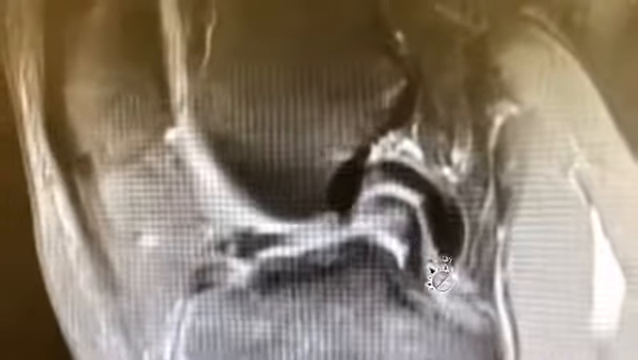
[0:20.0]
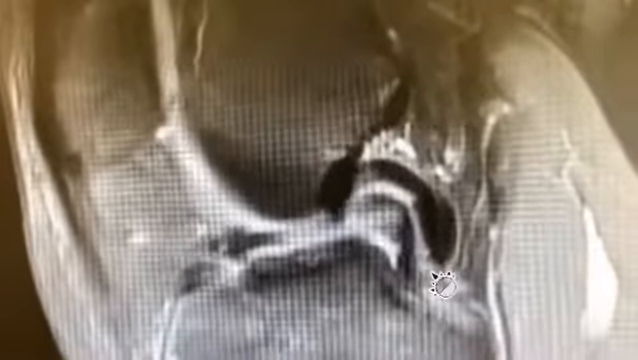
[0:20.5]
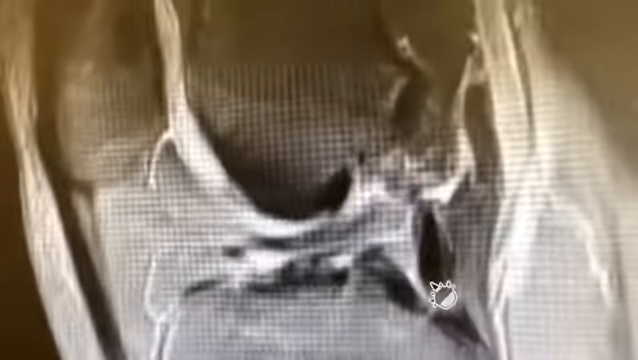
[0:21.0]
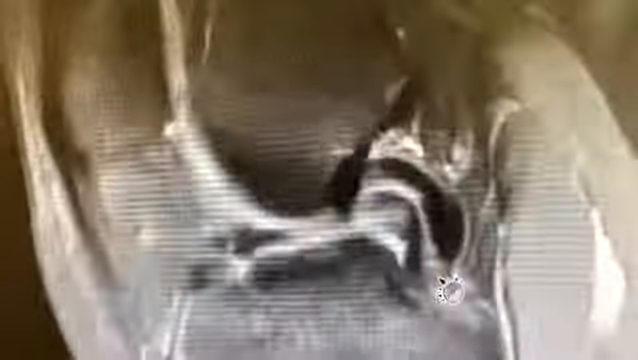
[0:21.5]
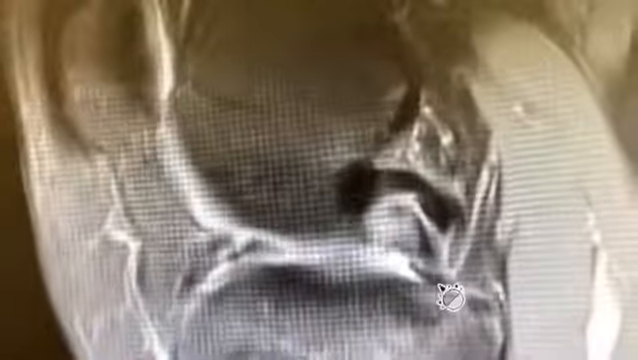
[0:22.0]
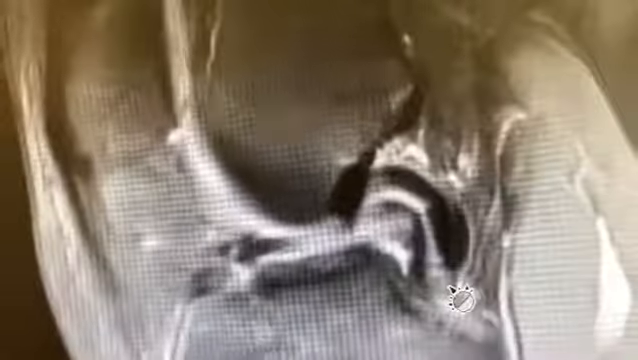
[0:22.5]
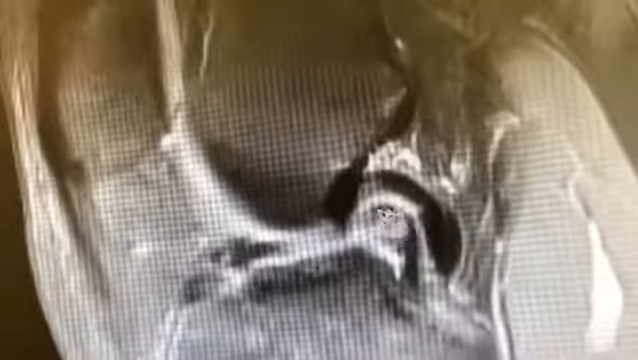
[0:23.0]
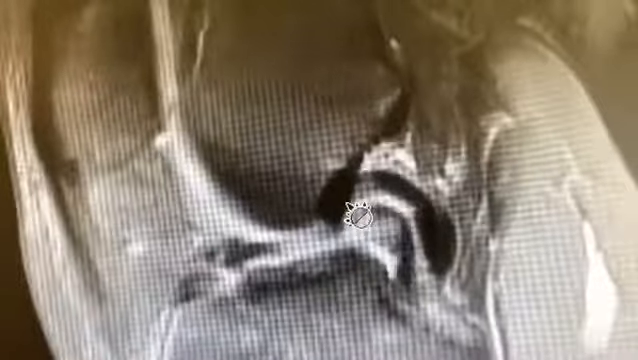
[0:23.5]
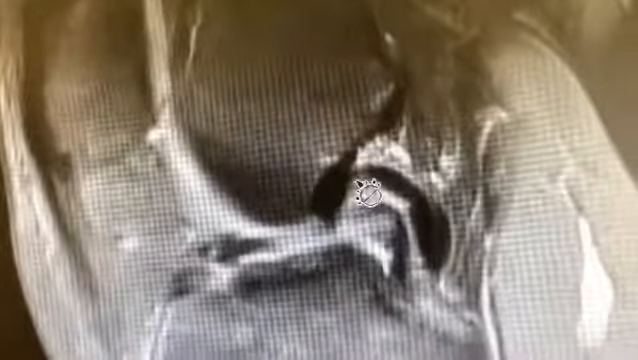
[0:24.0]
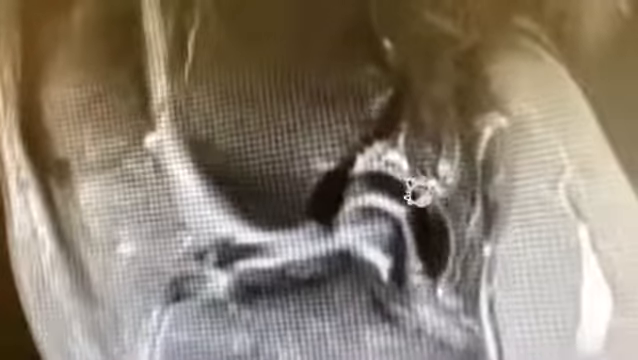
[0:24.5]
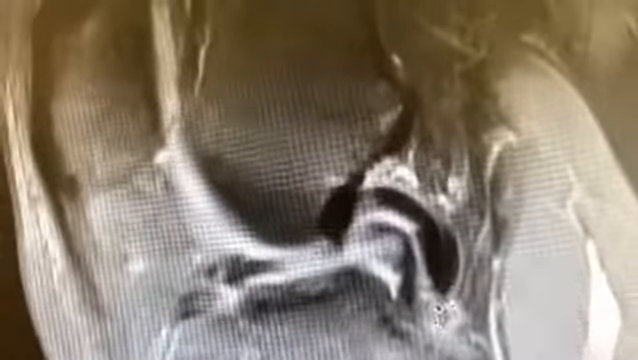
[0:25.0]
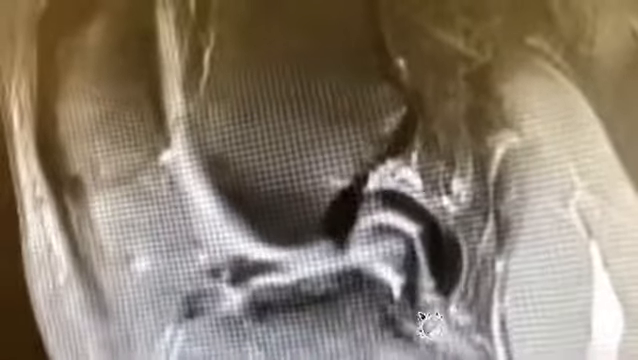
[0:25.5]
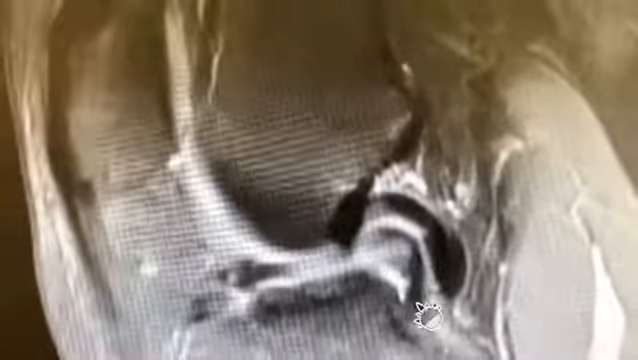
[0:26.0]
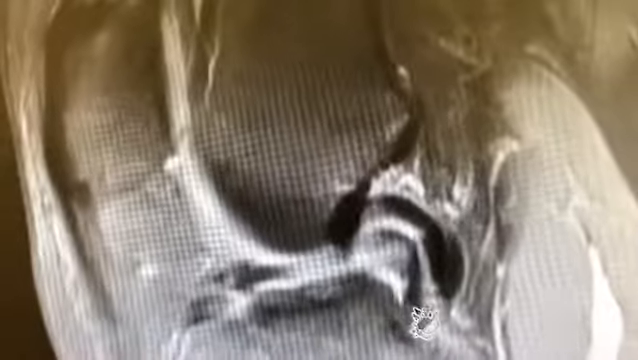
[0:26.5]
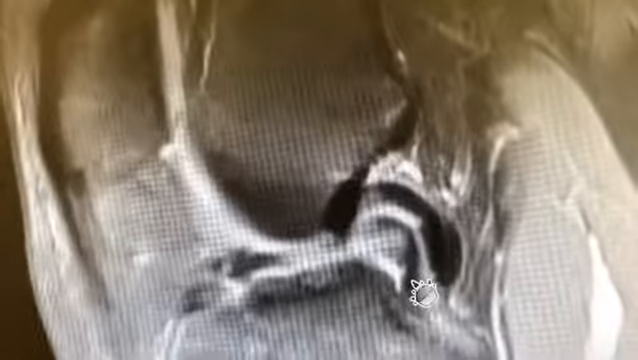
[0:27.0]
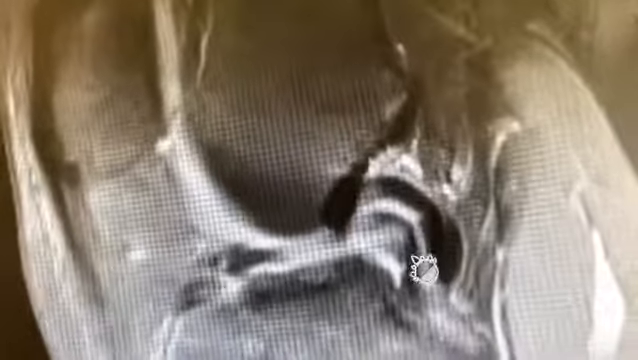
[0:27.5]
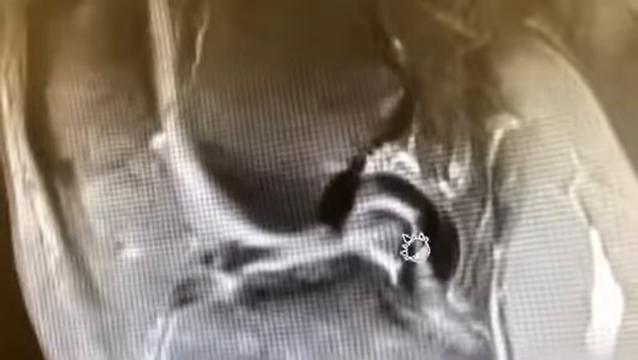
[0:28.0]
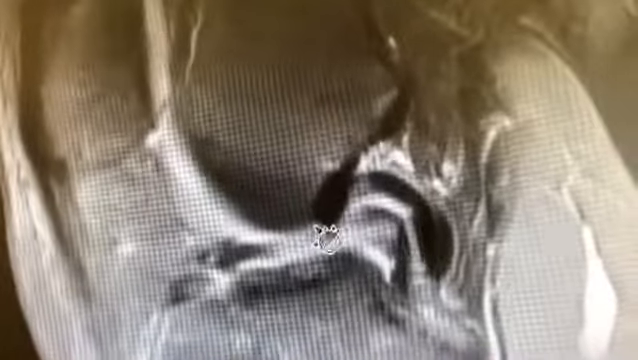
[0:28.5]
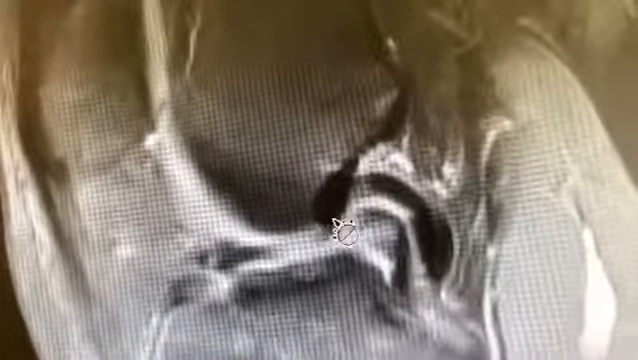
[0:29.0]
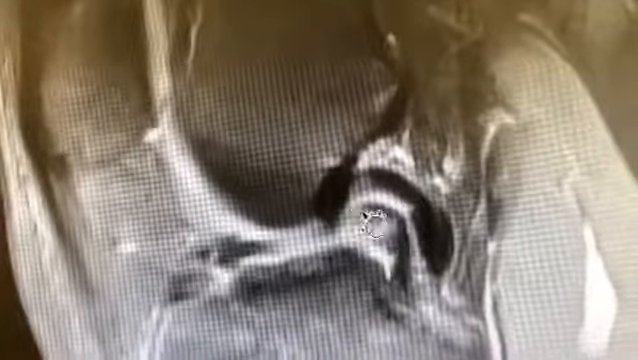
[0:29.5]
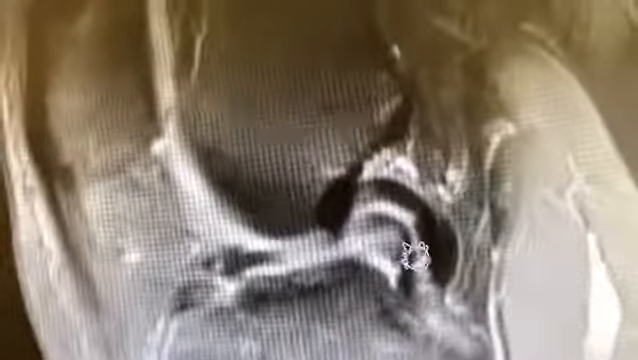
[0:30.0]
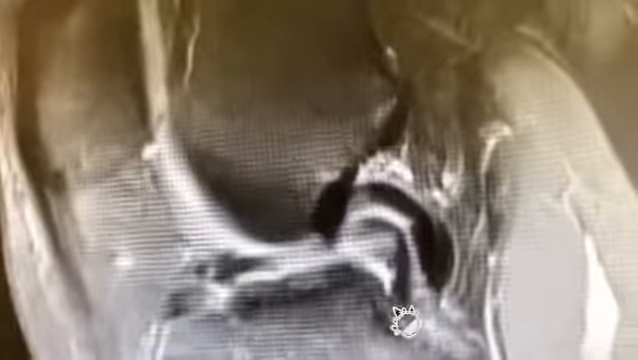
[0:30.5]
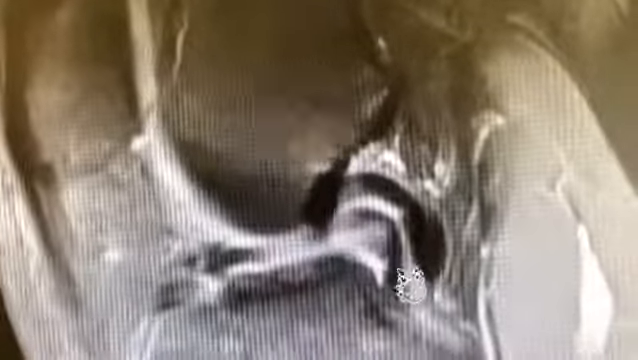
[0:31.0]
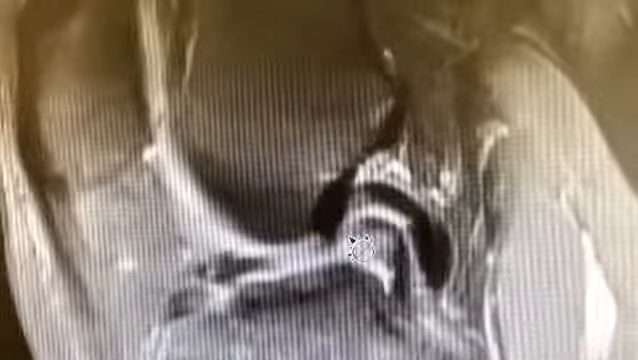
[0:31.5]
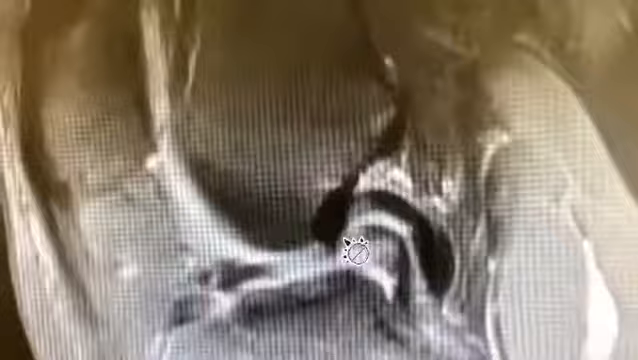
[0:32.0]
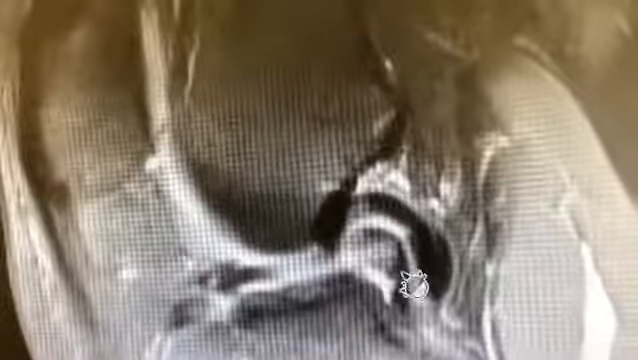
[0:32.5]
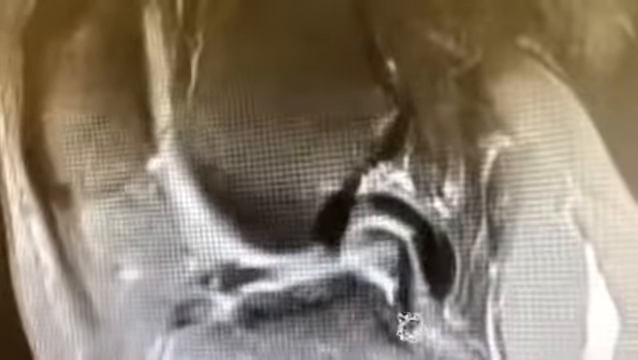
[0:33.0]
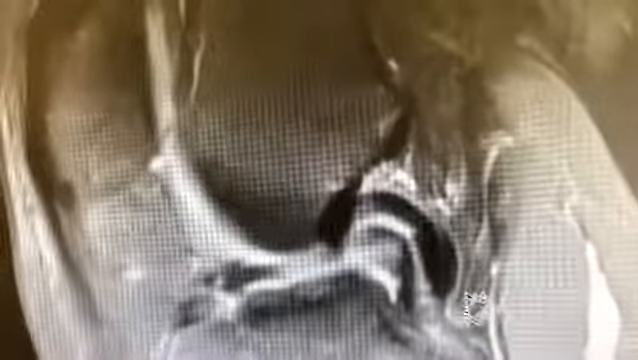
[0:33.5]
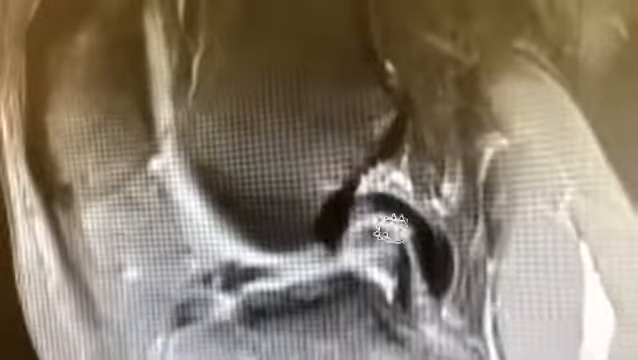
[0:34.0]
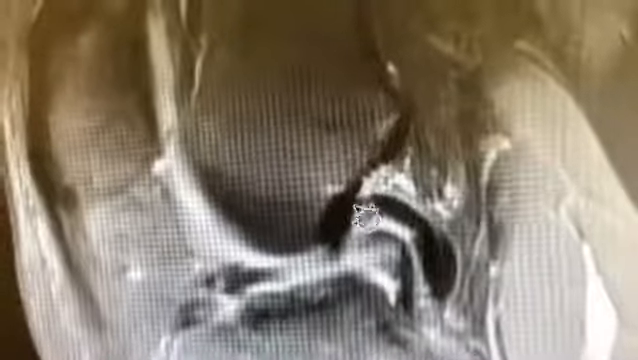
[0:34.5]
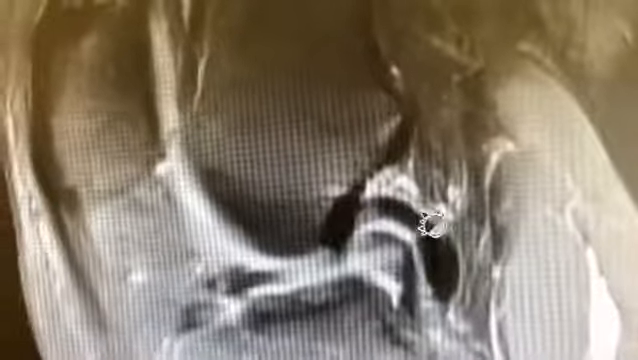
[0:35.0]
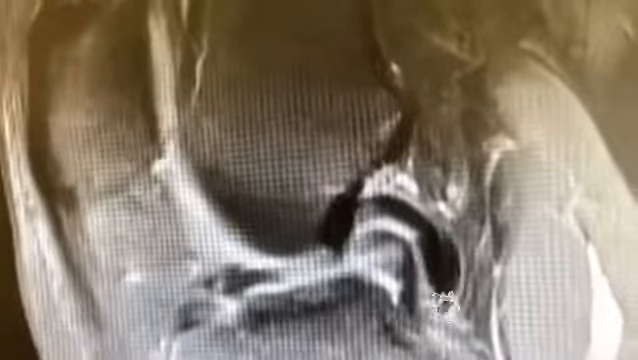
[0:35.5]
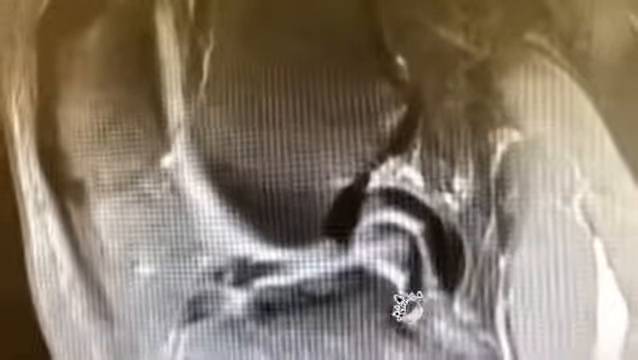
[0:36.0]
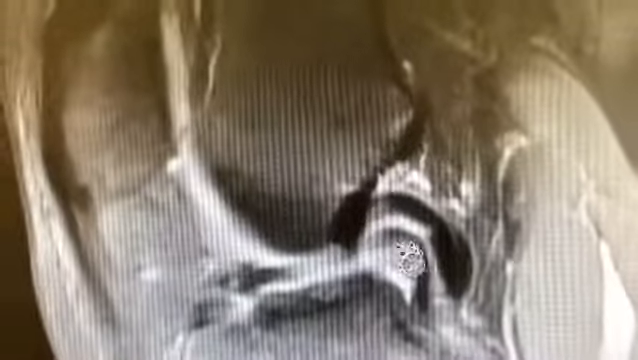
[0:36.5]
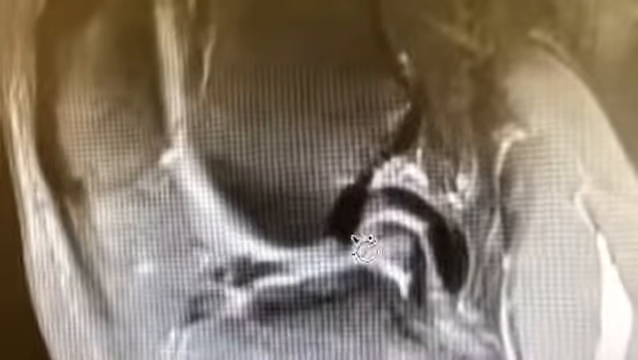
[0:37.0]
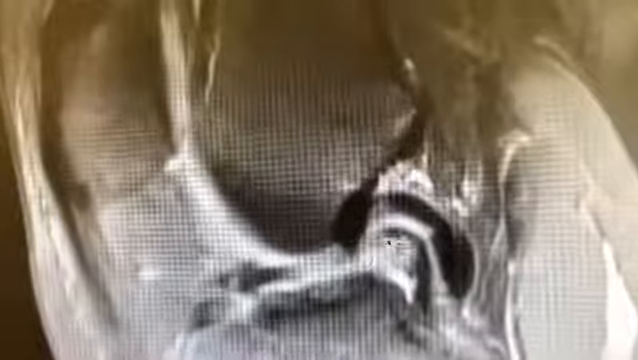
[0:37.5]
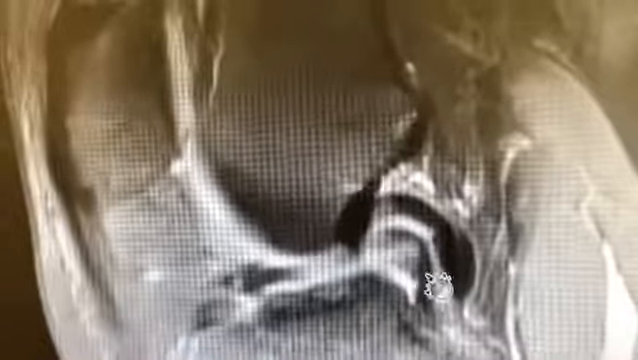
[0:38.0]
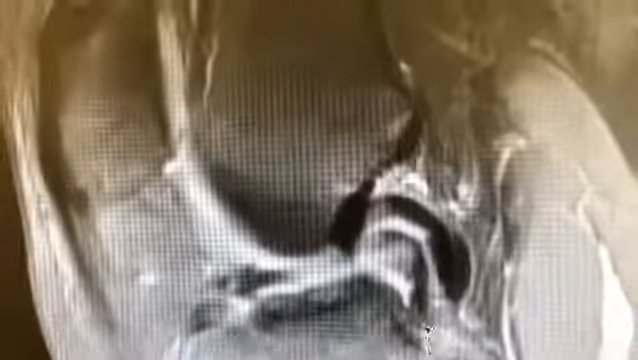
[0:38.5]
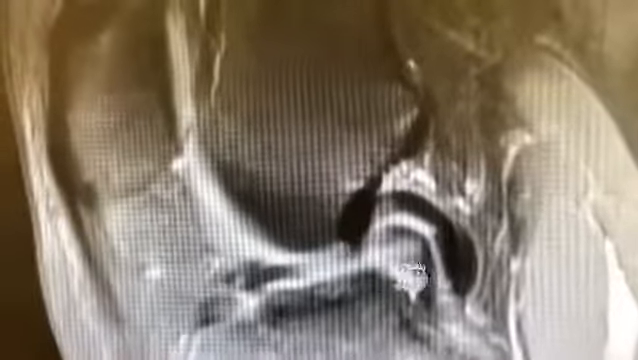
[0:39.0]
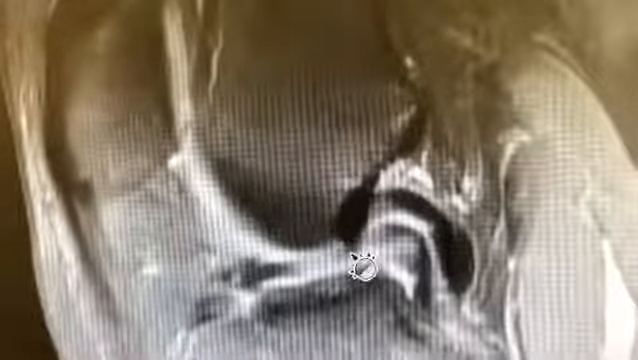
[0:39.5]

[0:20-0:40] The view remains zoomed in on the same area of the knee. The black curvature is not as prominent at first, and the mouse pointer is focused on that area. The image then morphs, and the black curvature slowly comes together to form the entire curvature. As it forms, white lines, possibly muscle and cartilage, are visible throughout the knee, and the muscle and cartilage look like they go through or underneath the black curvature. The video stays focused on the black curvature for several seconds, and the person seems to trace the curvature with the mouse pointer. The pointer then traces over a smaller curvature underneath the big one, which almost looks like a rainbow, with the structure of an arch, and the person highlights and focuses on that area for several seconds.